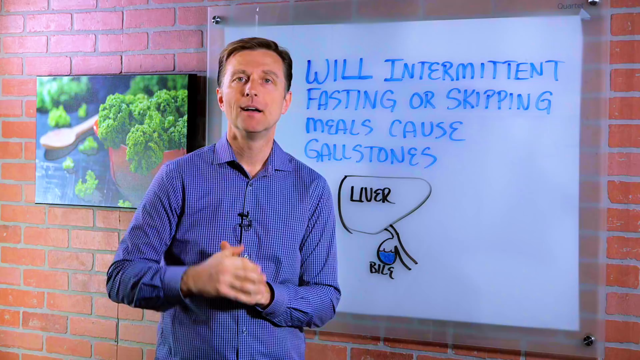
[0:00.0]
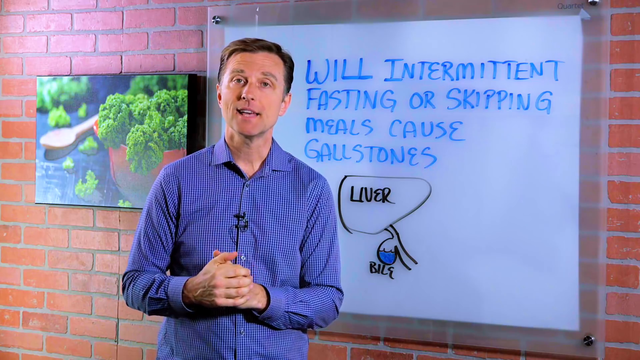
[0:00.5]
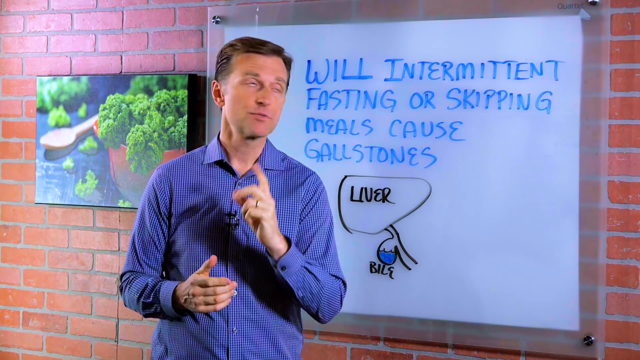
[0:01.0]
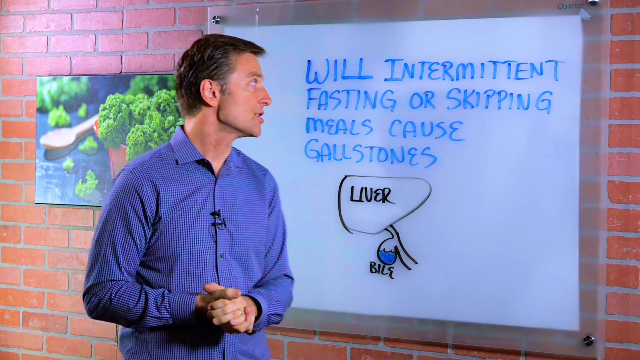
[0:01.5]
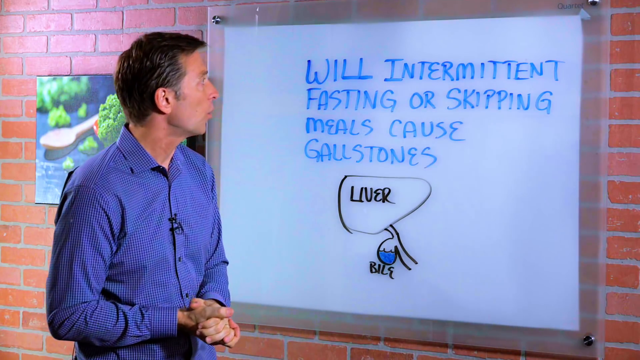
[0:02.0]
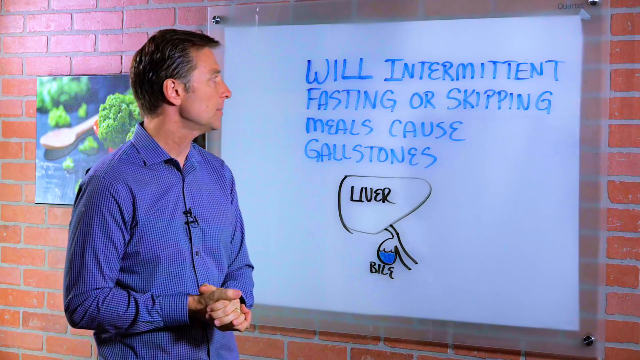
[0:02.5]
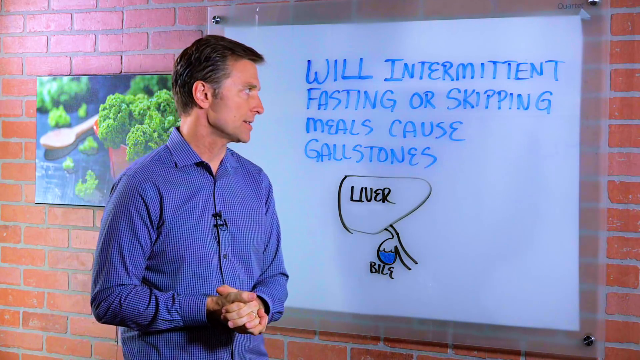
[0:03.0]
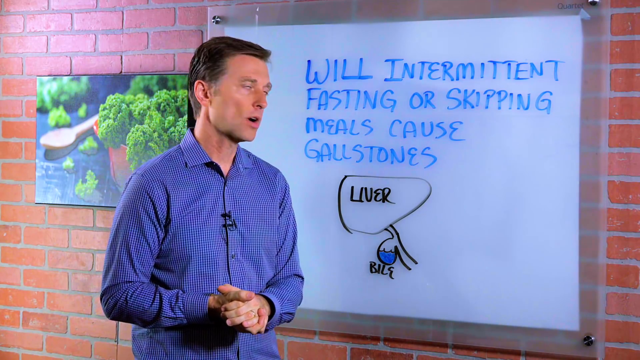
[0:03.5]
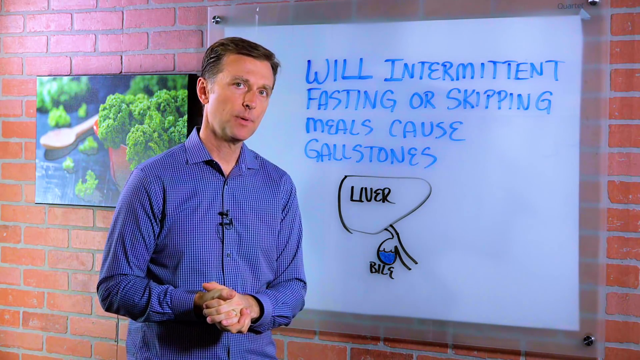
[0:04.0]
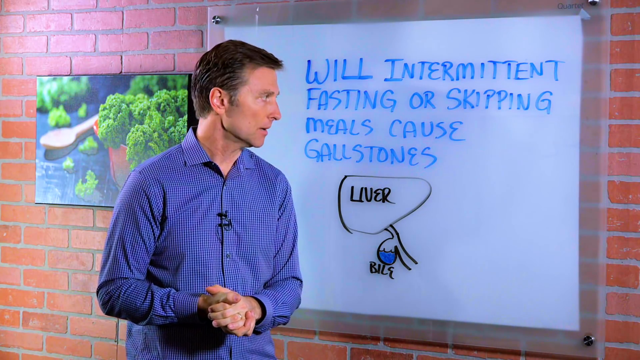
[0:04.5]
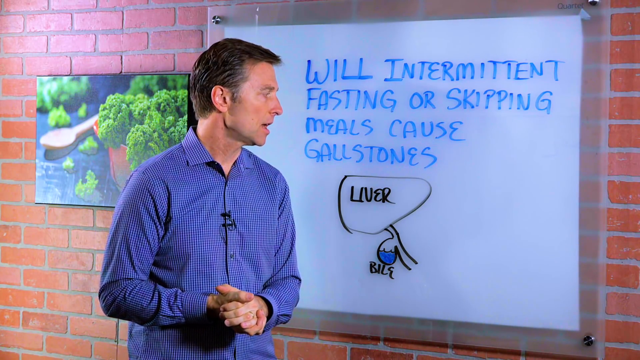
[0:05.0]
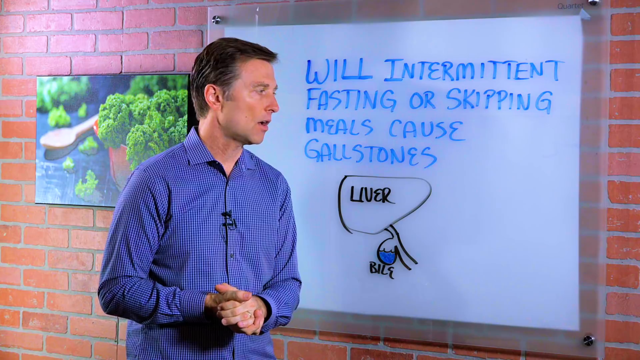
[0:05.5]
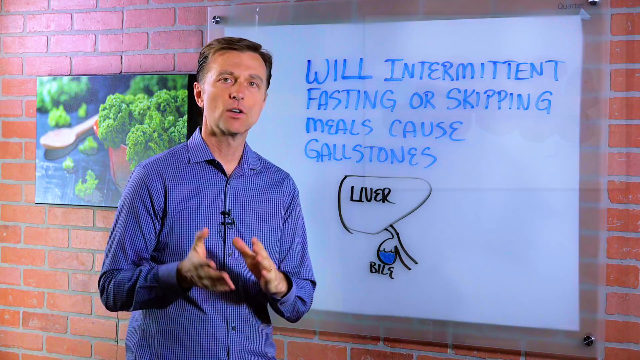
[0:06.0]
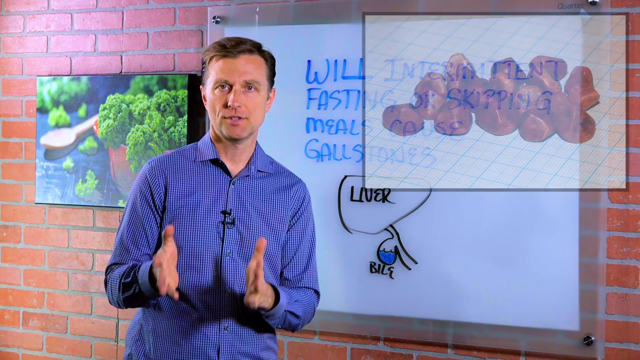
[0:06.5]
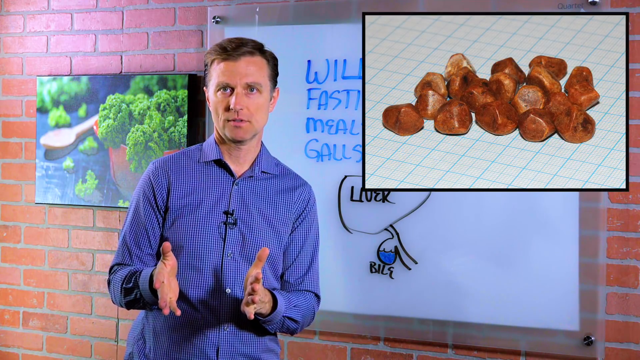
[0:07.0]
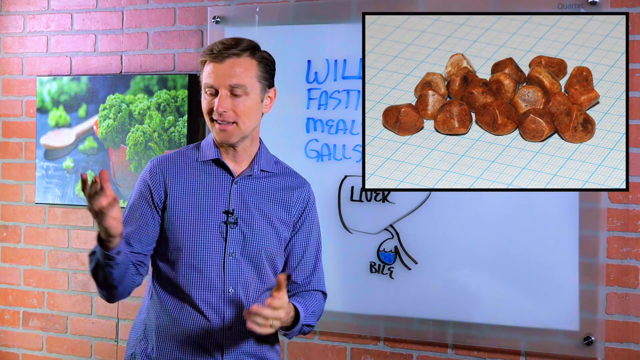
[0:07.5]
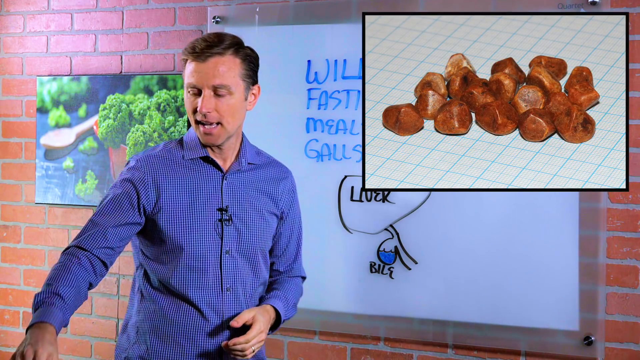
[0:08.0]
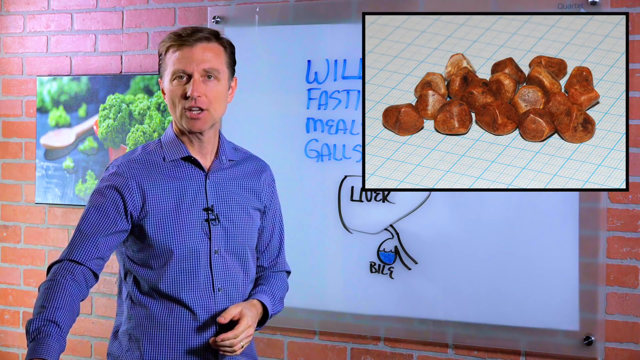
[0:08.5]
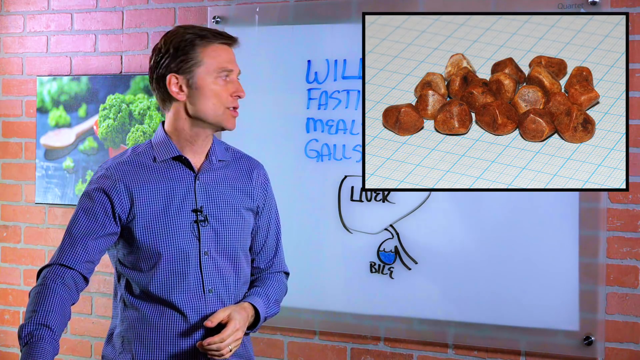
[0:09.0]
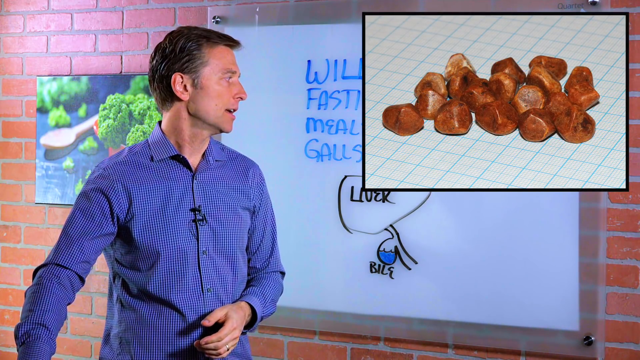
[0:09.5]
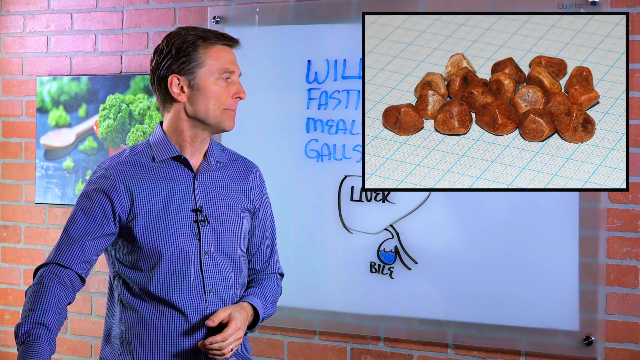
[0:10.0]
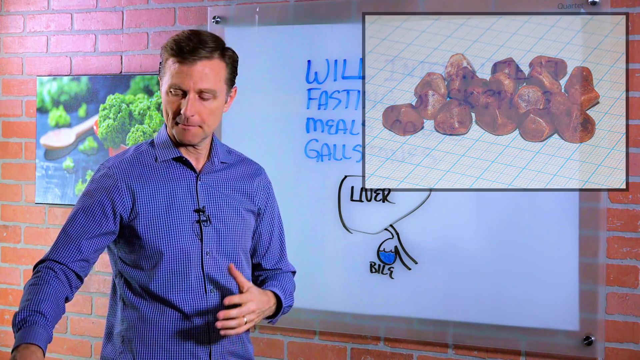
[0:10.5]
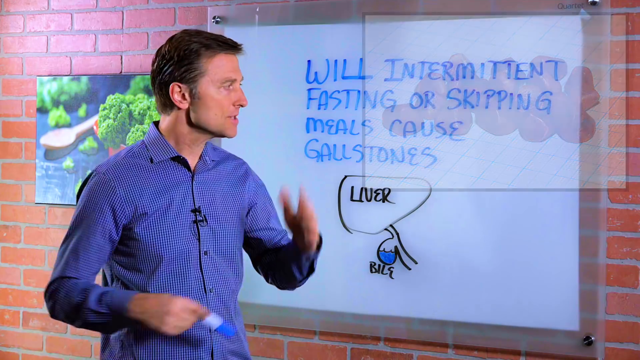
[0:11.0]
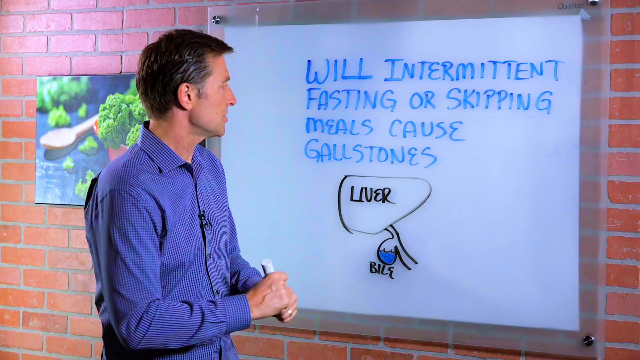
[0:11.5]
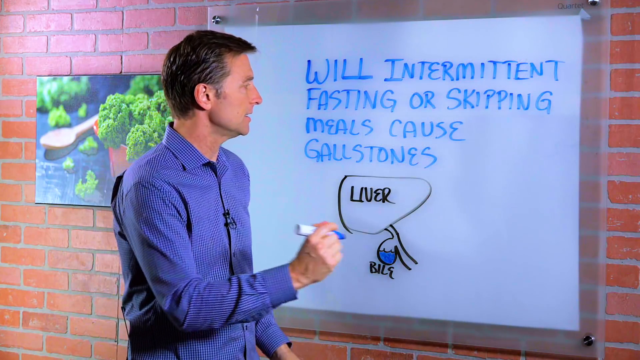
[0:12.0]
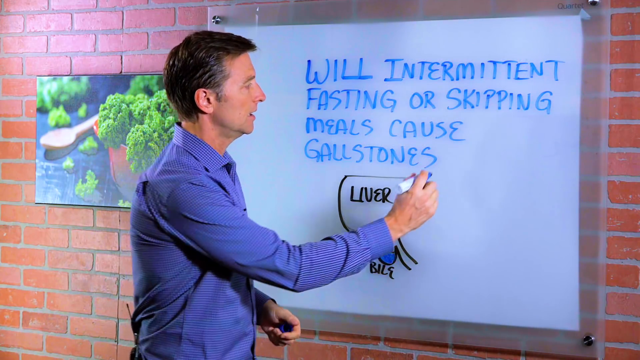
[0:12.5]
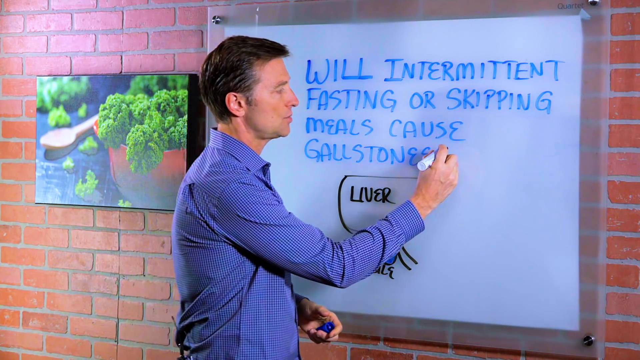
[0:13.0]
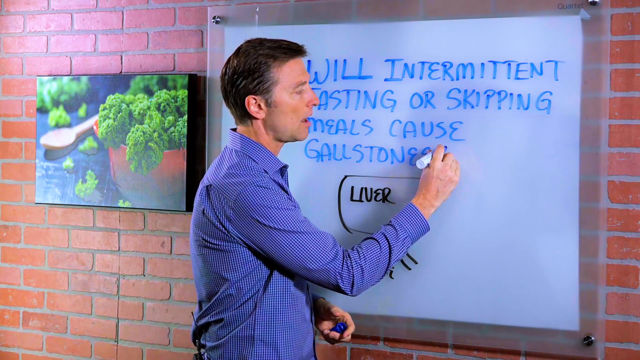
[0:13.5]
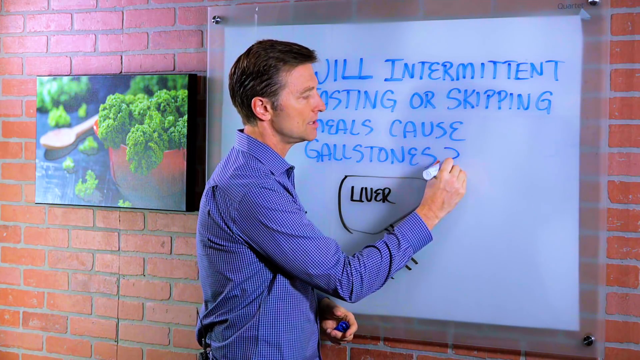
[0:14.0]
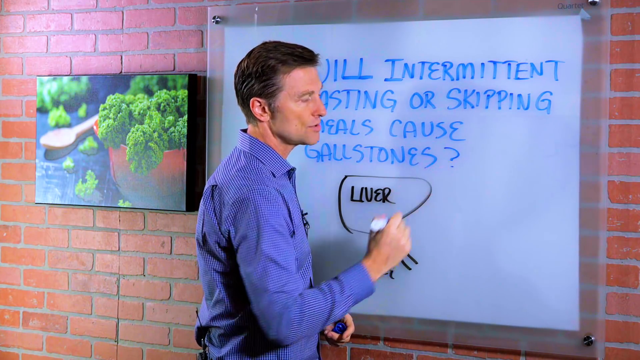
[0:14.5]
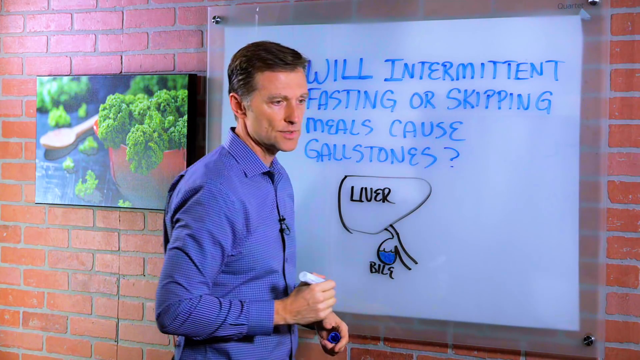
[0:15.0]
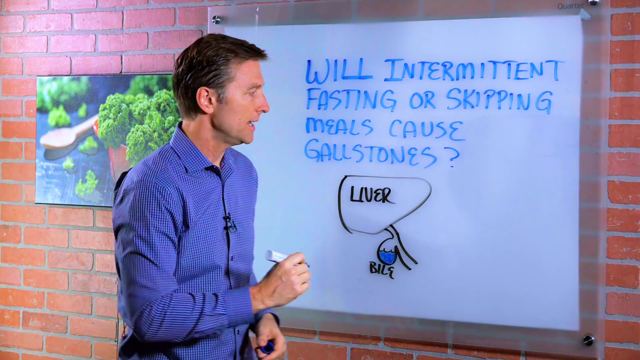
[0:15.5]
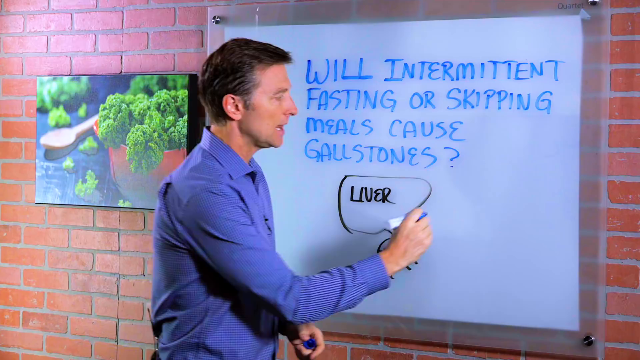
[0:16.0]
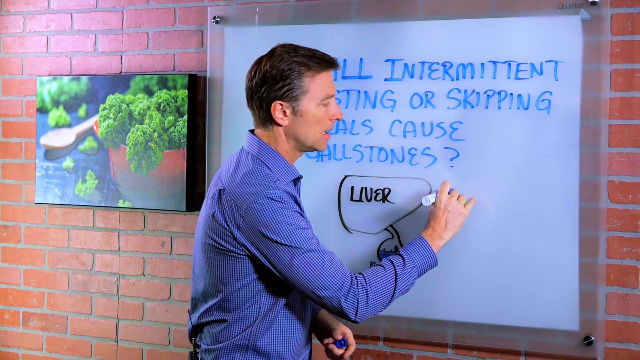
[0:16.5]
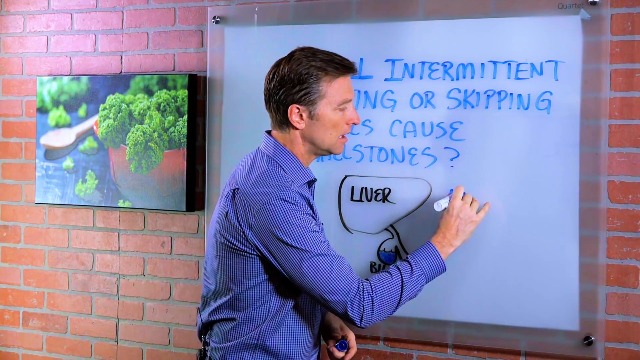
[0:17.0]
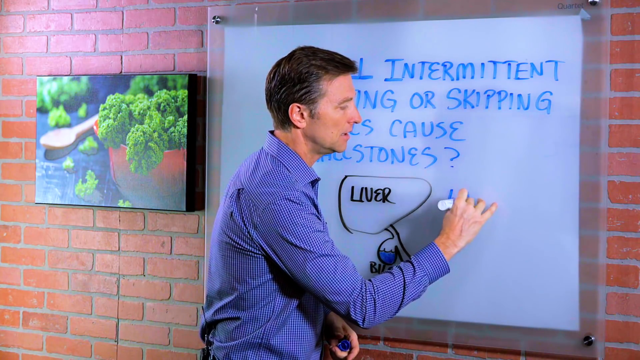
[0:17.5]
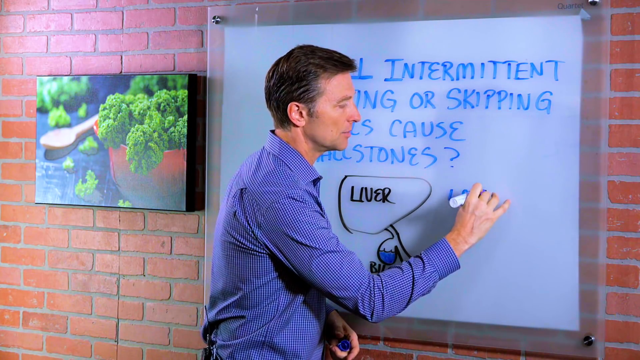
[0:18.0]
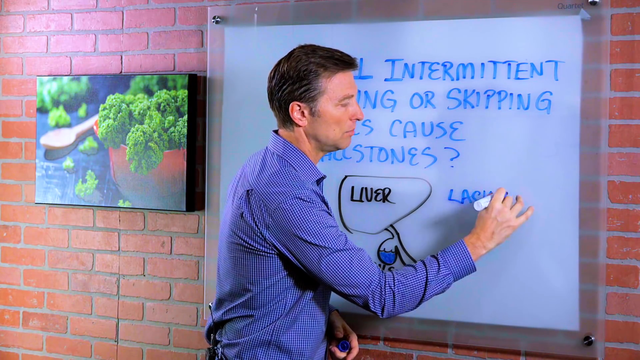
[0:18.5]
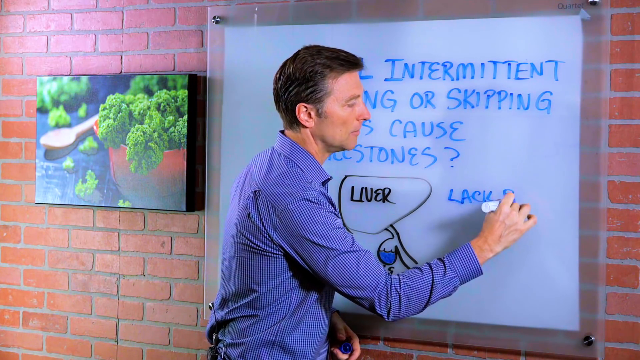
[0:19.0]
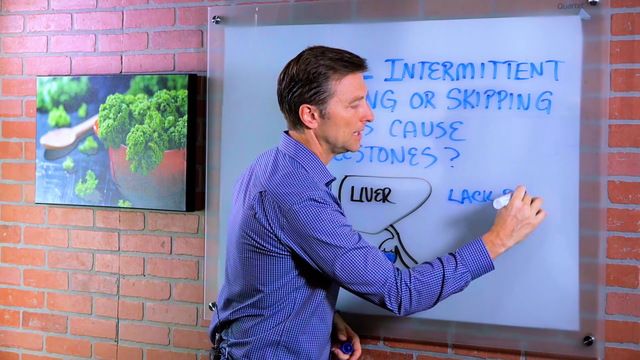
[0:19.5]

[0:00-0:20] A man in a blue shirt stands in front of a whiteboard. The whiteboard looks to be on a brick wall, or it may be some sort of smart board. Behind him on the wall is a picture of broccoli in a pot with a wooden spoon. On the whiteboard is written "will intermittent fasting or skipping meals cause gallstones", and he adds a question mark. There is an uncoloured marker drawing of what seems to be a liver and the bile duct, with a small label on the side that says "bile". A picture of what appear to be gallstones, kind of reddish brown, comes up in the right-hand corner of the video. He talks and writes "lack of bile" on the whiteboard with a blue marker.